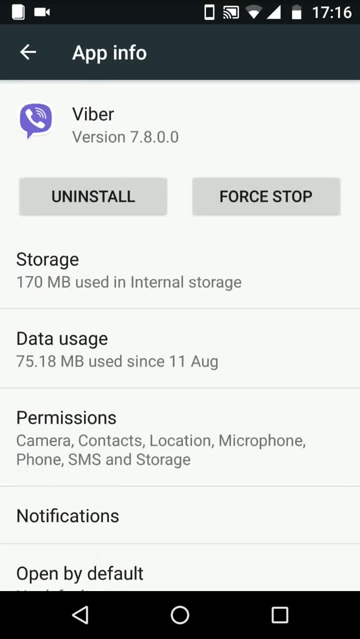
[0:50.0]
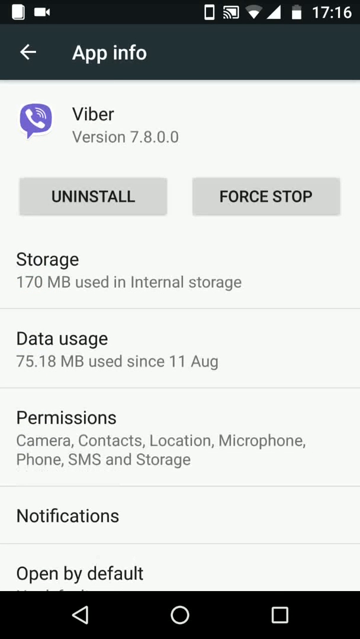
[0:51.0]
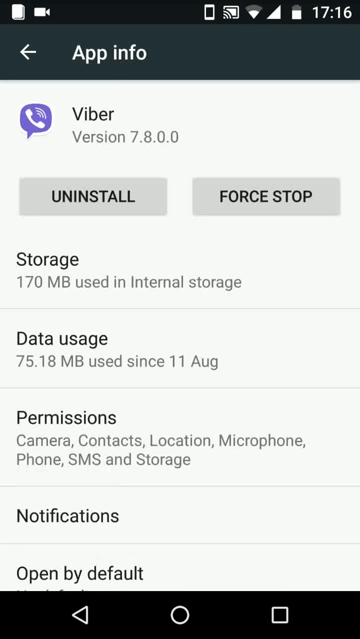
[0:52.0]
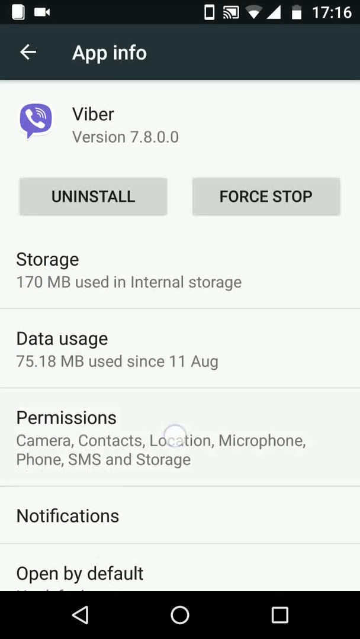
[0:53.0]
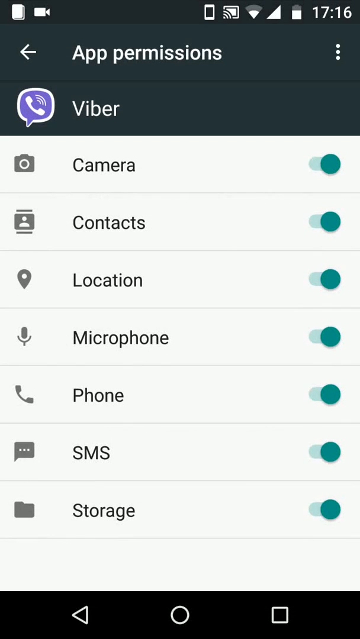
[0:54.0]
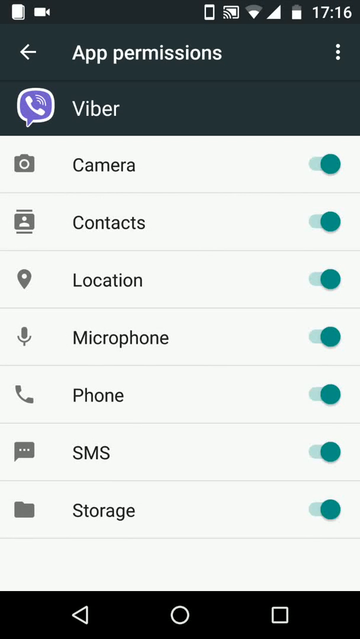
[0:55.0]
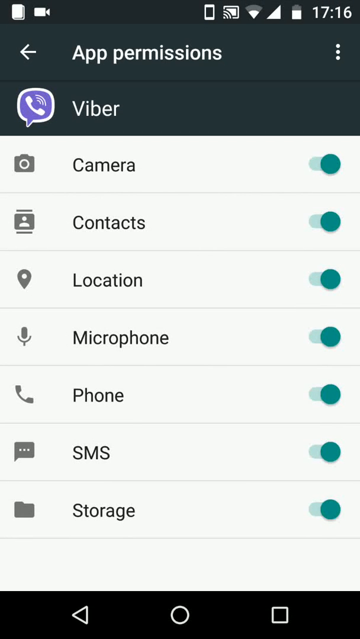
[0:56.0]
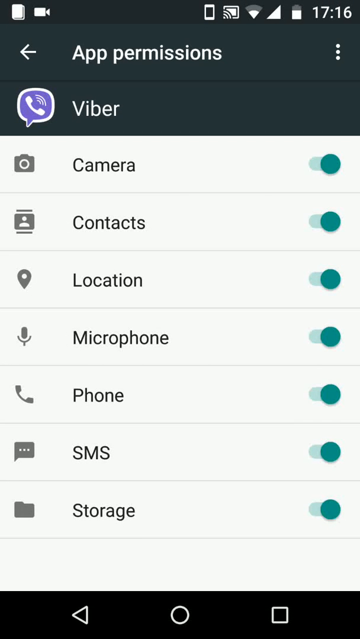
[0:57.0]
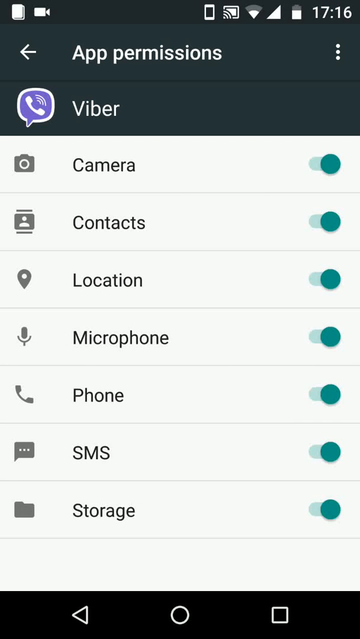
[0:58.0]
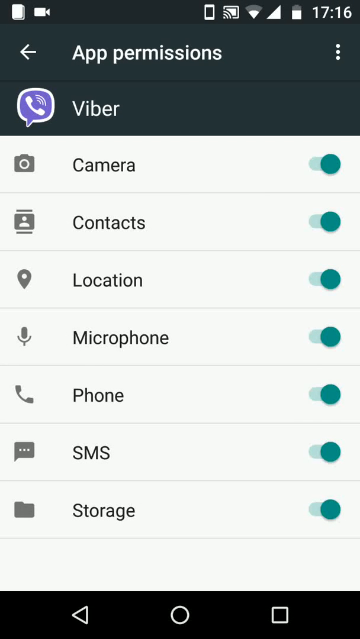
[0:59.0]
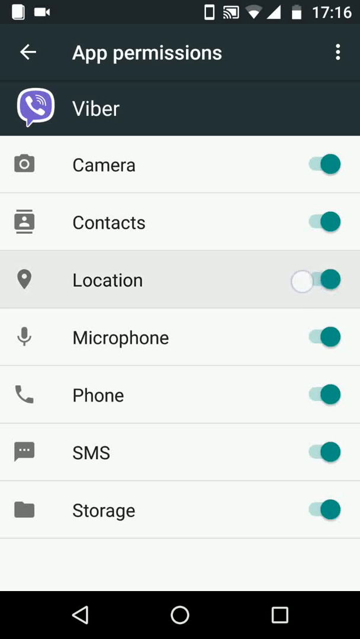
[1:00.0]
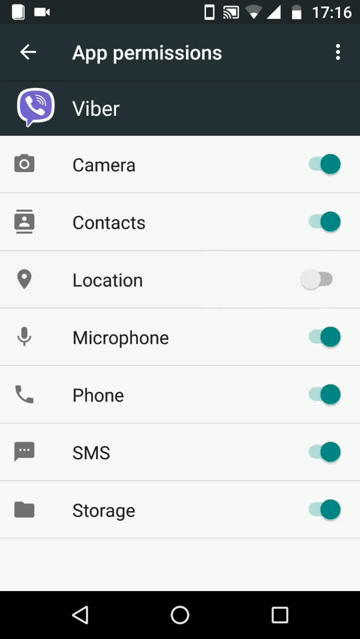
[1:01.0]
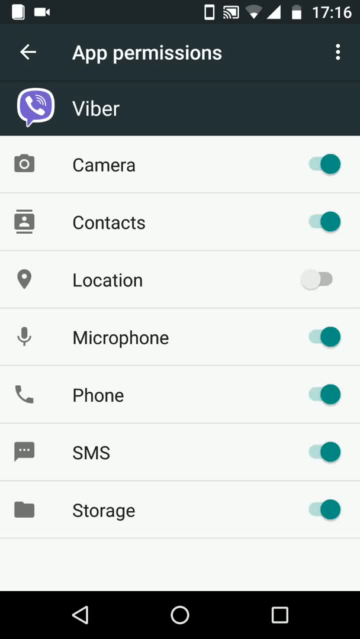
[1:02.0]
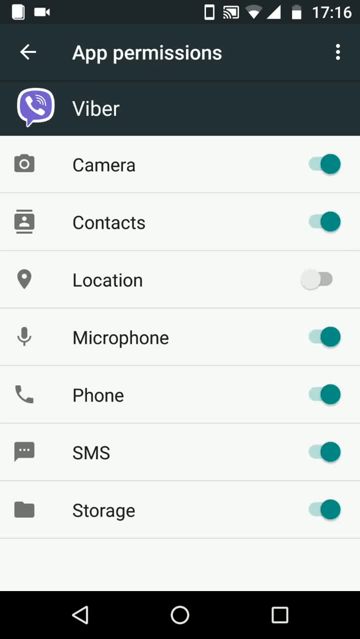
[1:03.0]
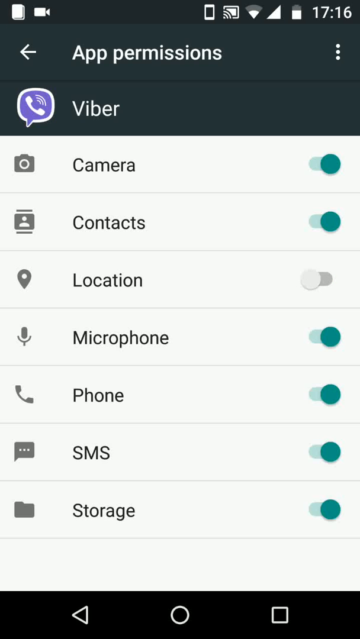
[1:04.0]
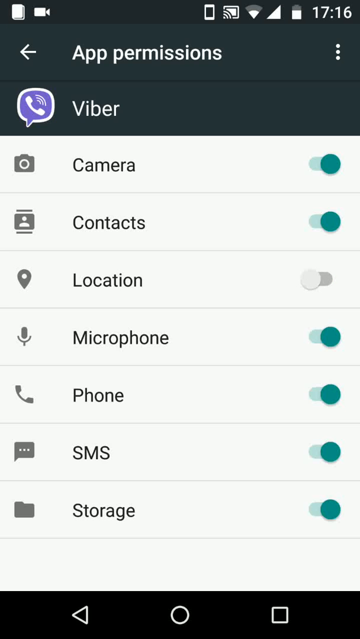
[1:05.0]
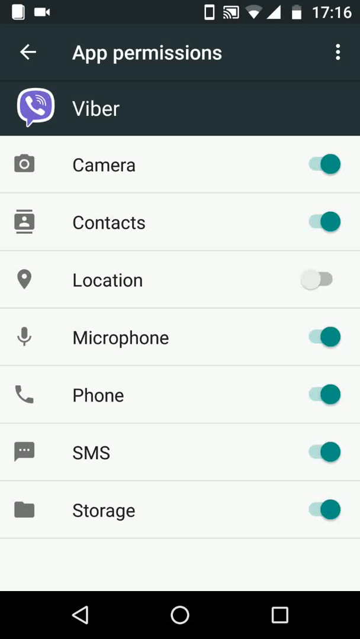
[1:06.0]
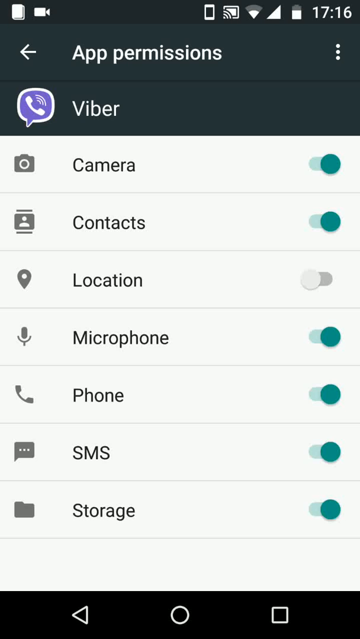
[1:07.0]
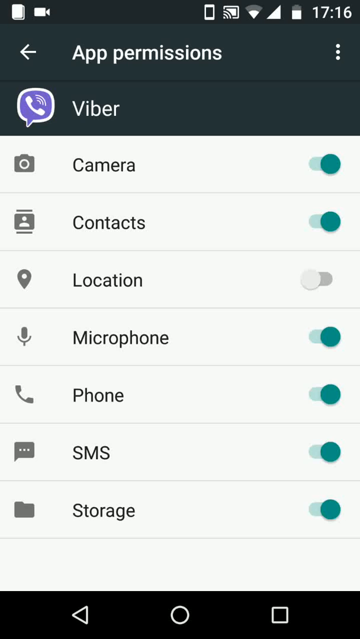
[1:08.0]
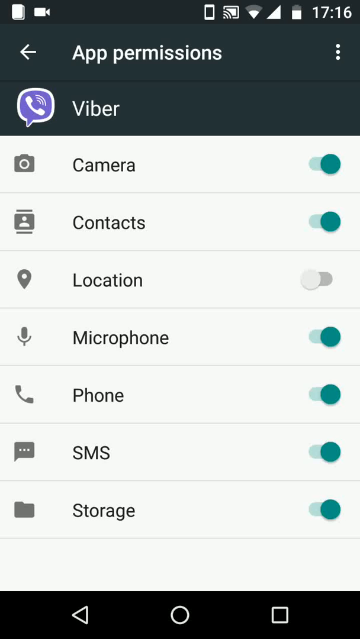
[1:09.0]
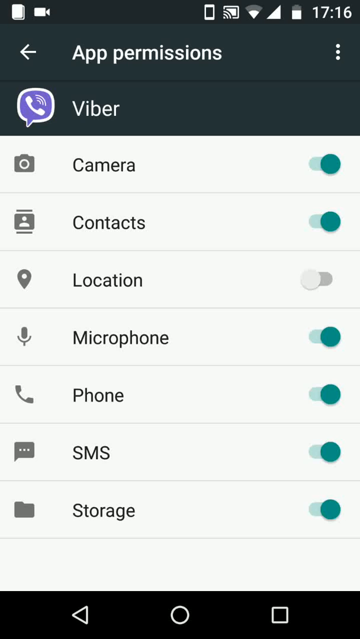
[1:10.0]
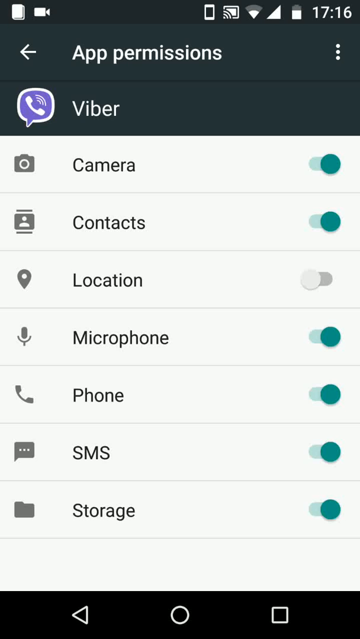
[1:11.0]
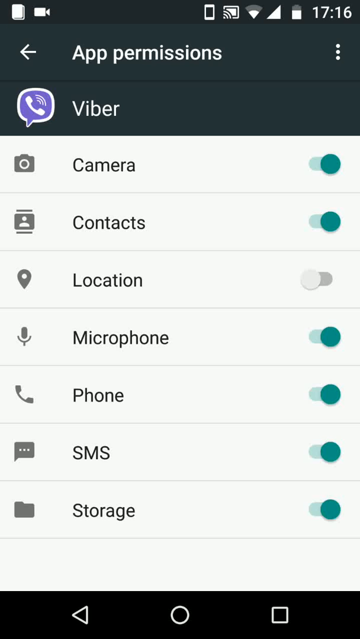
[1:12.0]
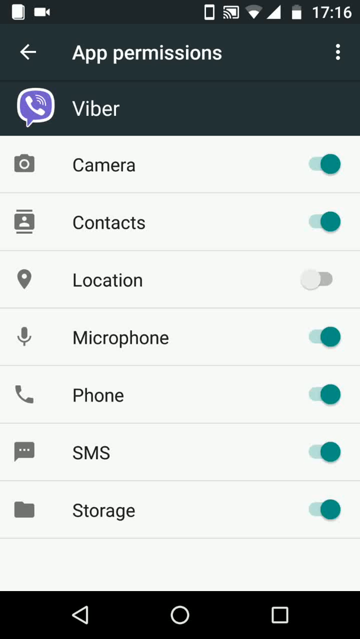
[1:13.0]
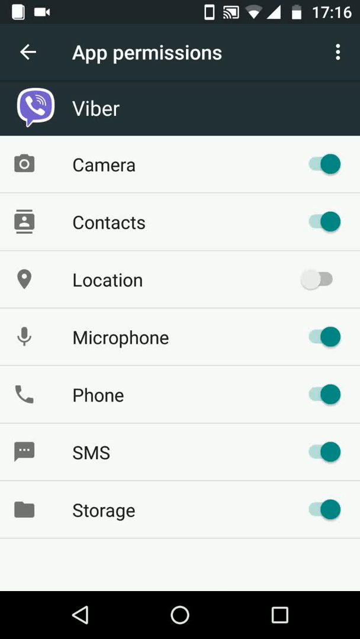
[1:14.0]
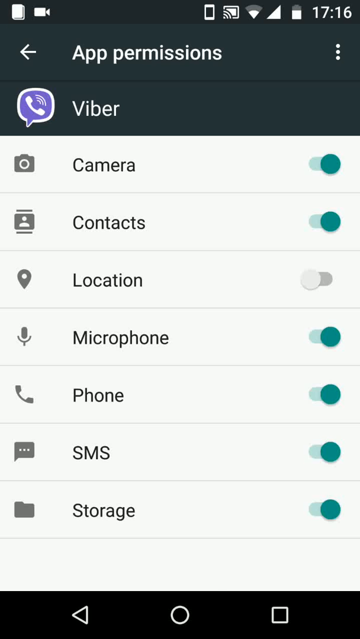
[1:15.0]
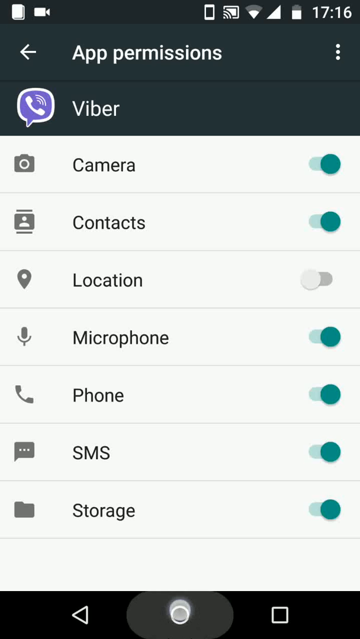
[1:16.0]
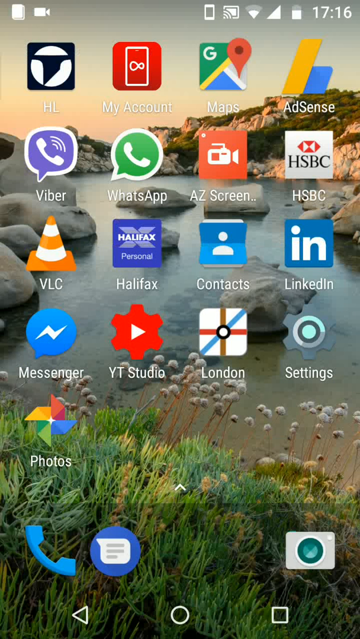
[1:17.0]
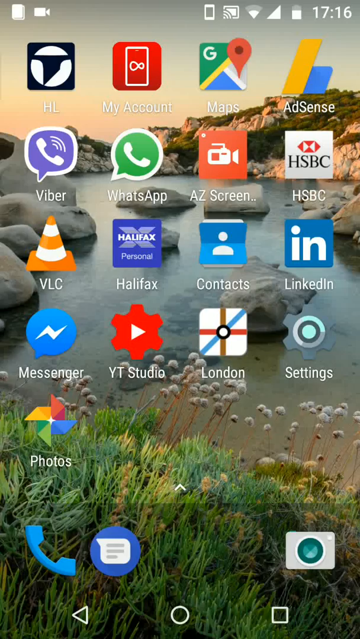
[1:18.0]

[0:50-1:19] Viber is selected in the app settings, and its permissions are shown. The location permission is disabled, so Viber no longer has access to the phone's location. Other permissions listed include camera, contacts, microphone, phone call, SMS and storage.